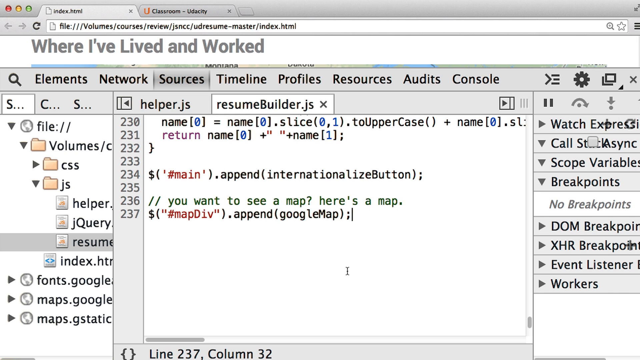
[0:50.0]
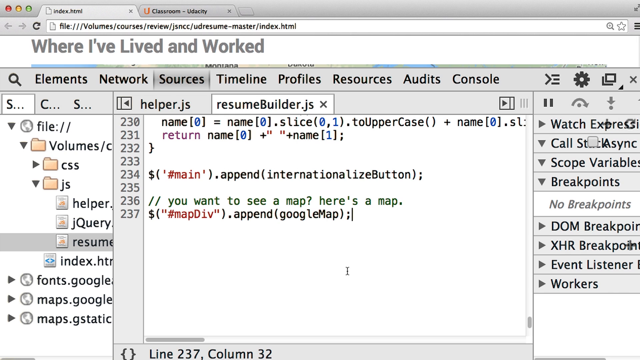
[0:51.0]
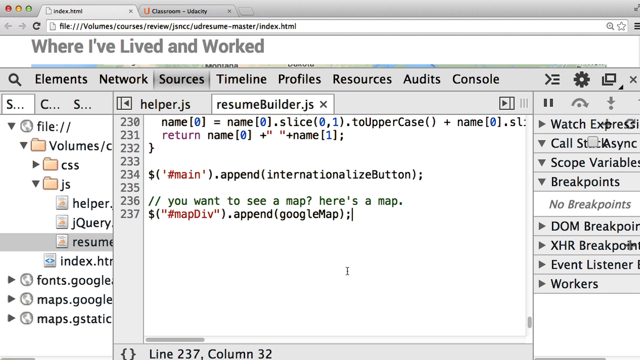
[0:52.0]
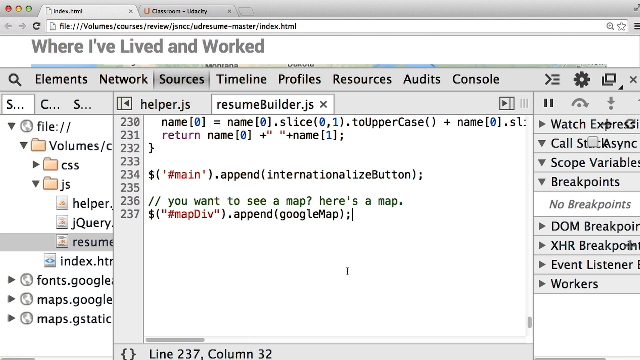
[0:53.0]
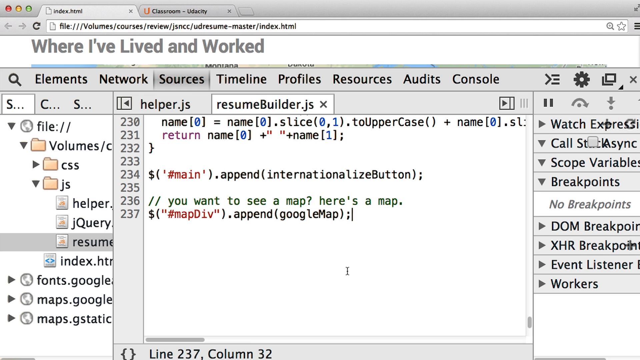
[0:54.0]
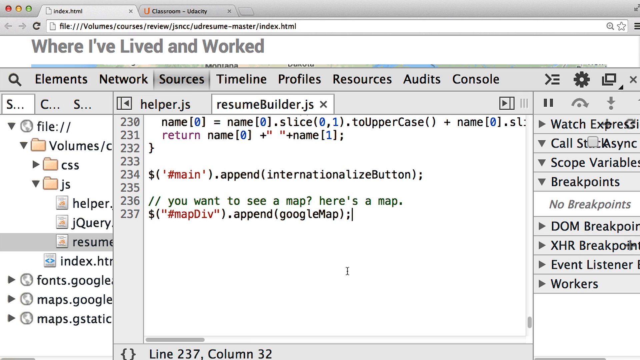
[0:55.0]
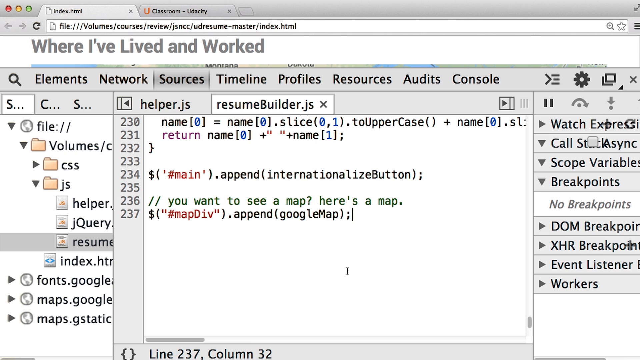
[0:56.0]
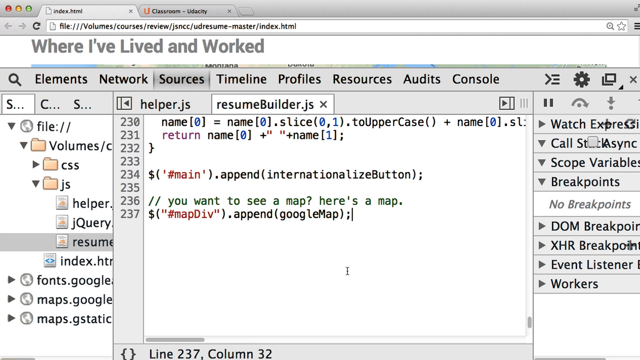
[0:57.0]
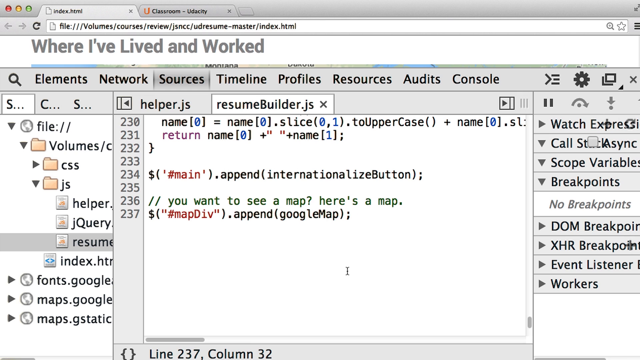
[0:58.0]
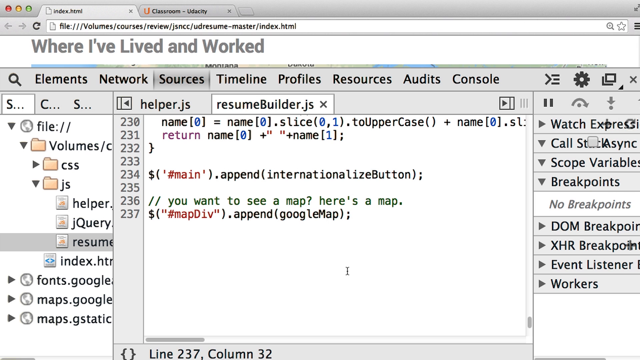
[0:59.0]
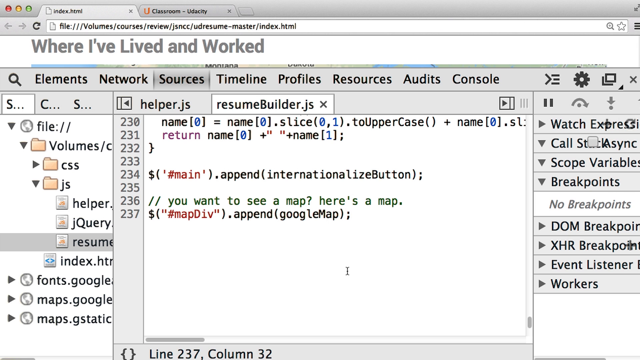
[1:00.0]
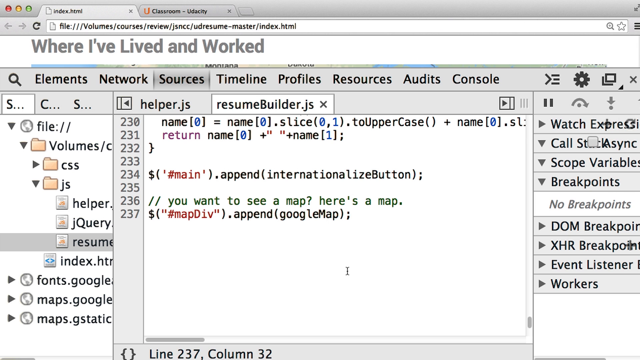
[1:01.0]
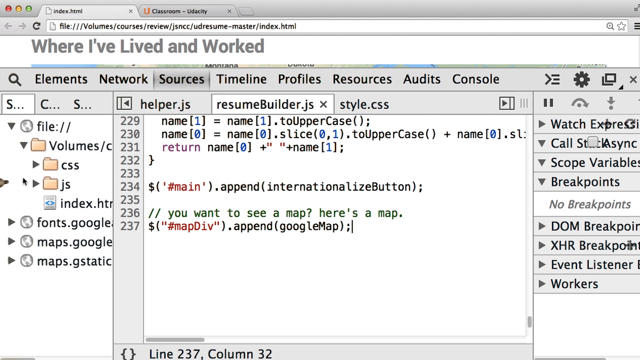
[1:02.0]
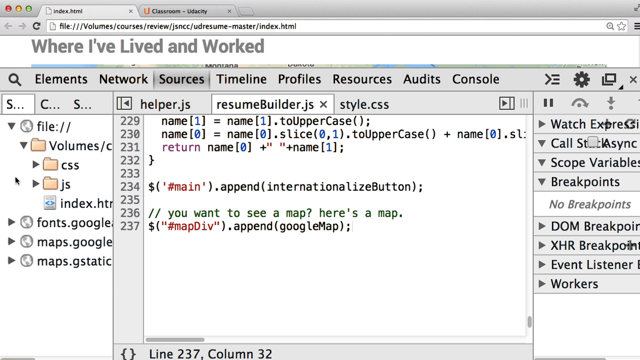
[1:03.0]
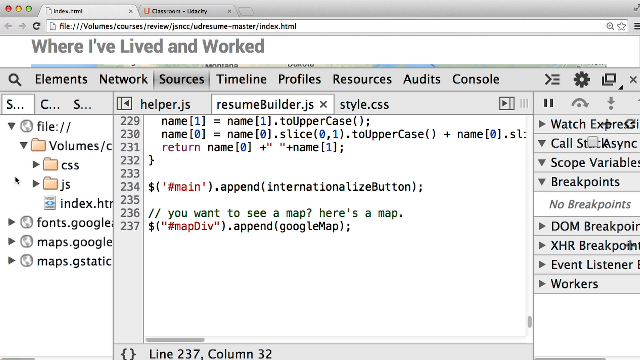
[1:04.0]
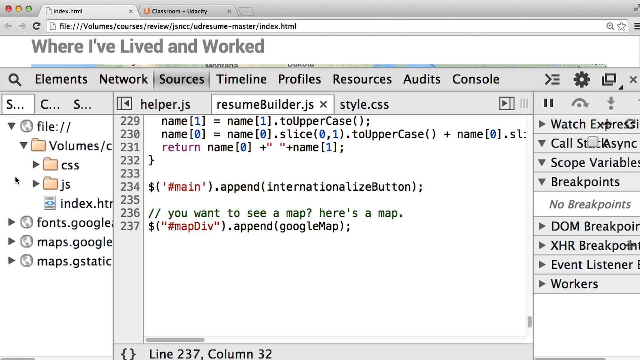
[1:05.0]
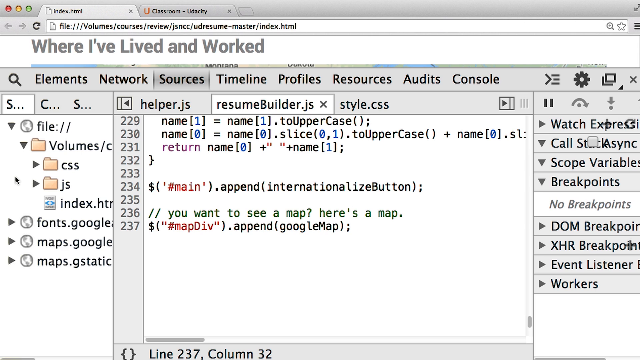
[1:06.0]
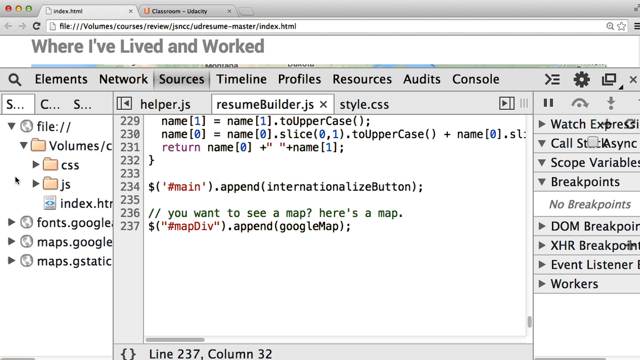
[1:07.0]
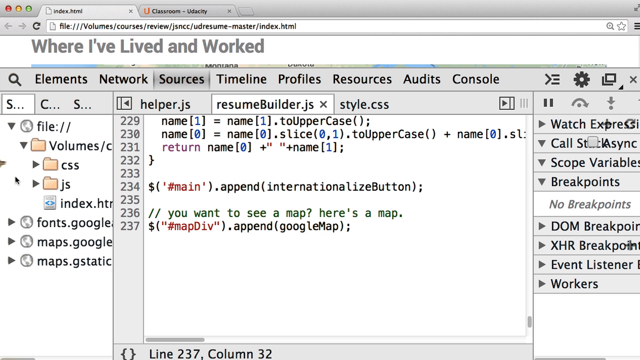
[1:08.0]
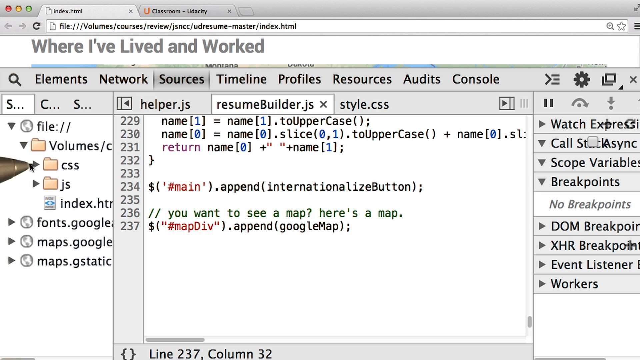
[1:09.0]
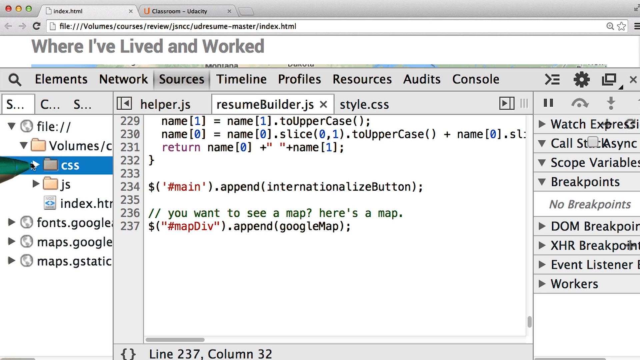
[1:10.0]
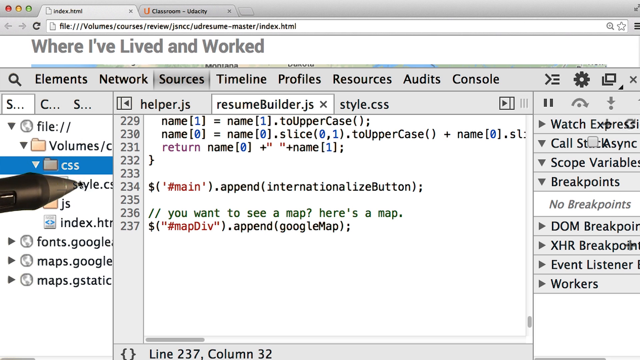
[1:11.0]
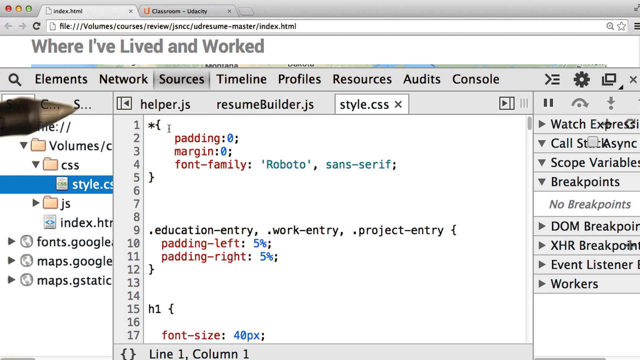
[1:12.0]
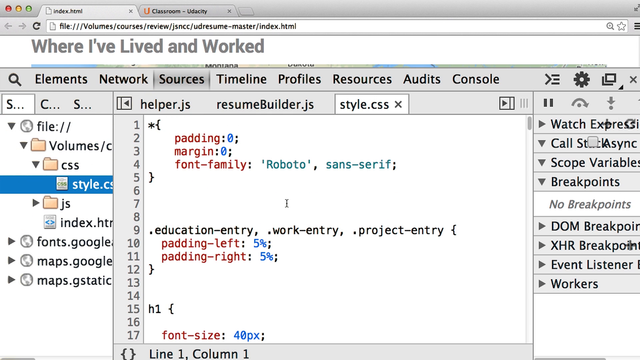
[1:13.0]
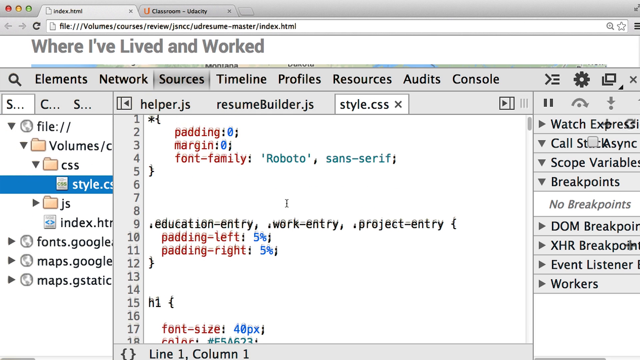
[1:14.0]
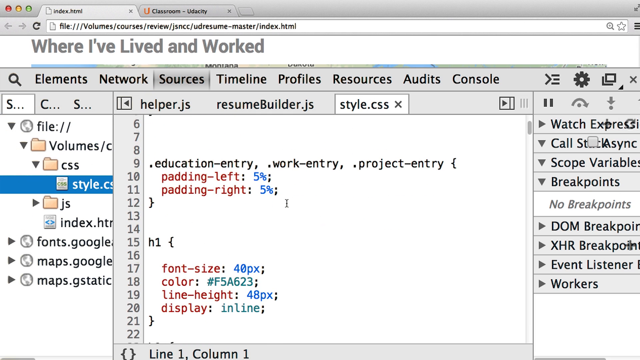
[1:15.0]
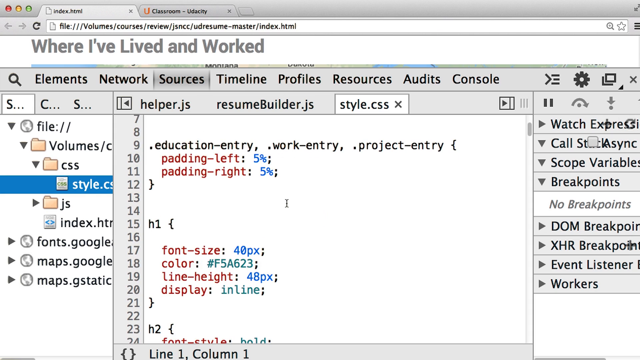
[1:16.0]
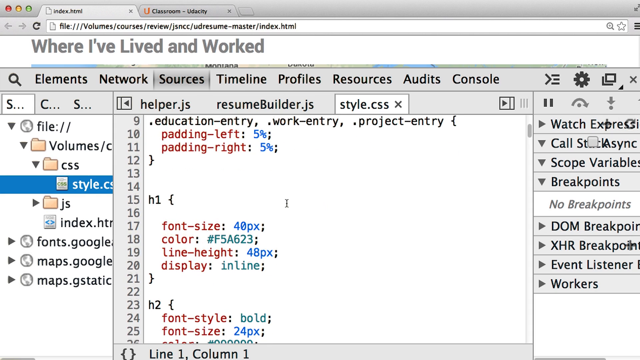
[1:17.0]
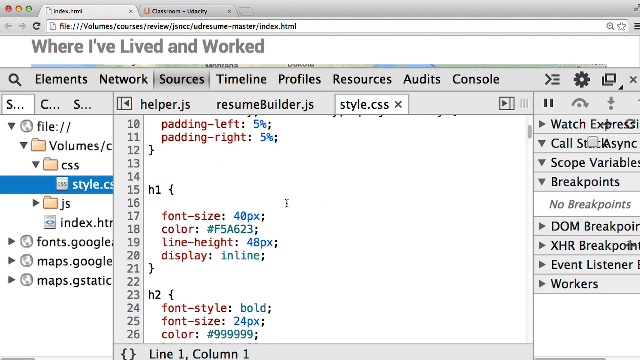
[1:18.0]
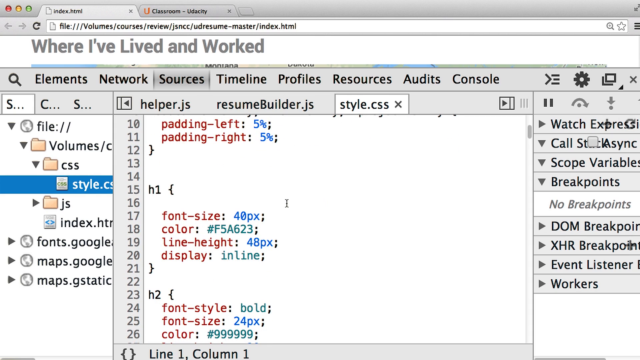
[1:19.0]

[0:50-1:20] One screen is up above another screen and above one that says "where I've lived and worked". The current screen has lots of different options at the top, with sources selected. The cursor is just below line 237, which references Google Map, and the icon is flashing right beside it. There are different options on either side that could be clicked to get to different areas. A pen is used to reference the left side of the screen, which holds several items that look like files and possibly bookmarks. It points specifically to a yellow folder labeled "CSS". The mouse pad is used to click the folder, which turns blue, and then "style", which drops out of it, is clicked. The mouse or the pen moves around, and a page comes up, which then scrolls down.